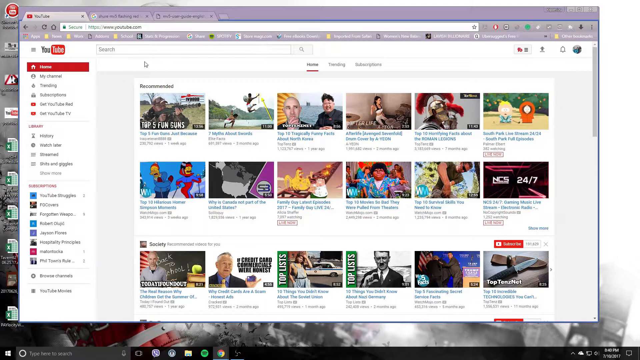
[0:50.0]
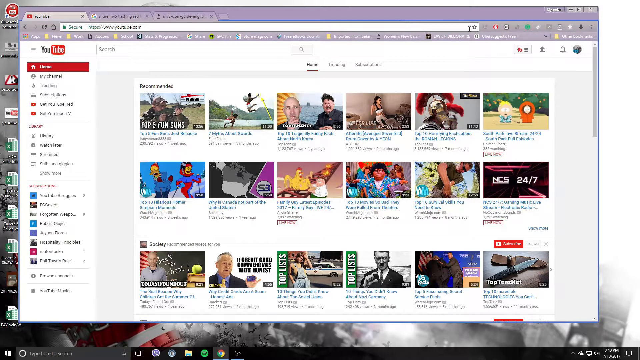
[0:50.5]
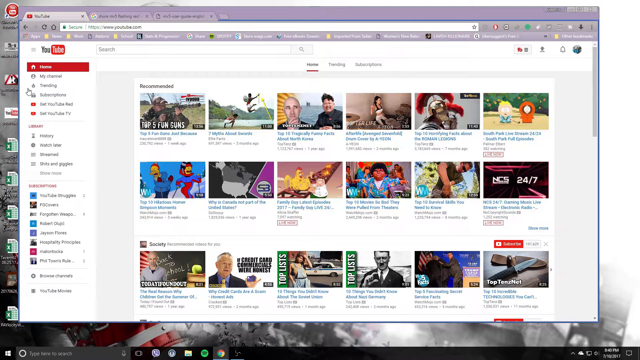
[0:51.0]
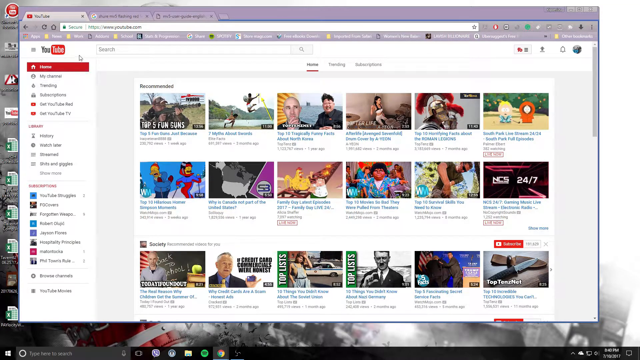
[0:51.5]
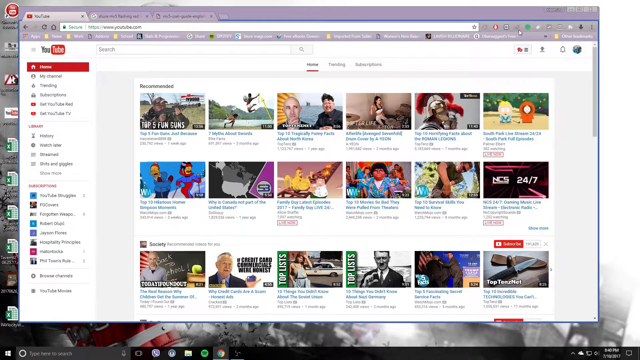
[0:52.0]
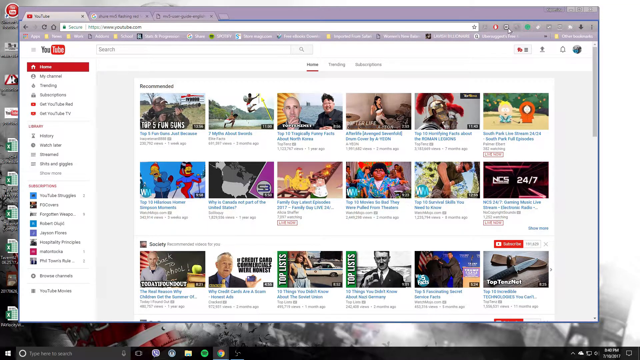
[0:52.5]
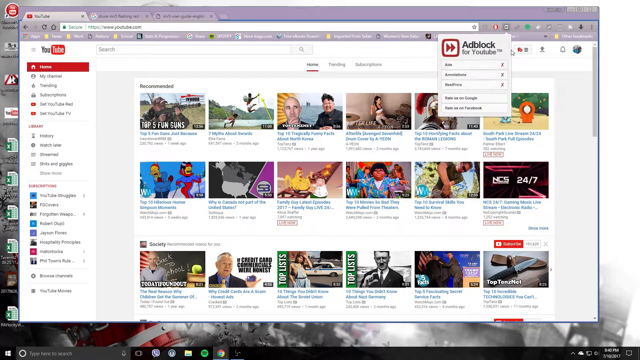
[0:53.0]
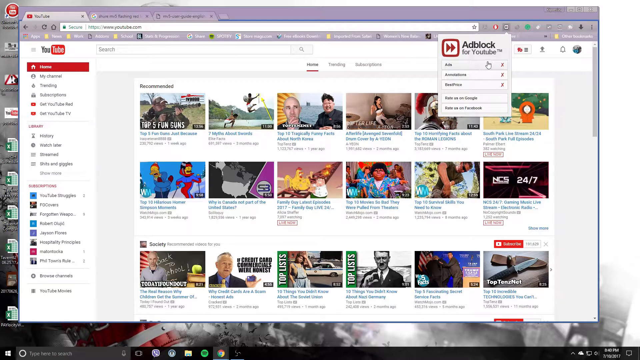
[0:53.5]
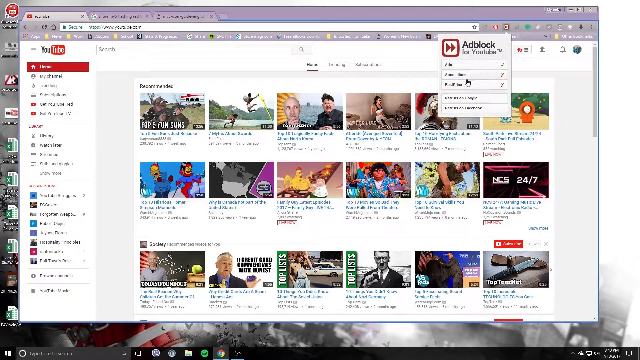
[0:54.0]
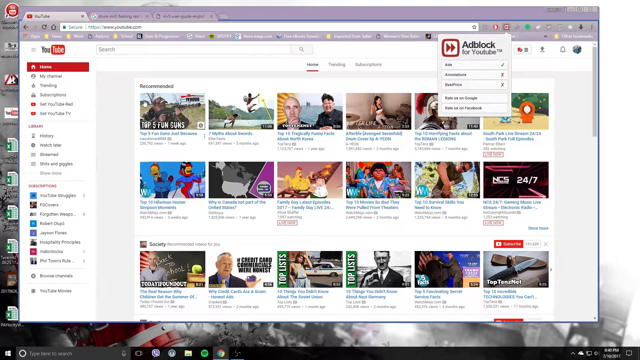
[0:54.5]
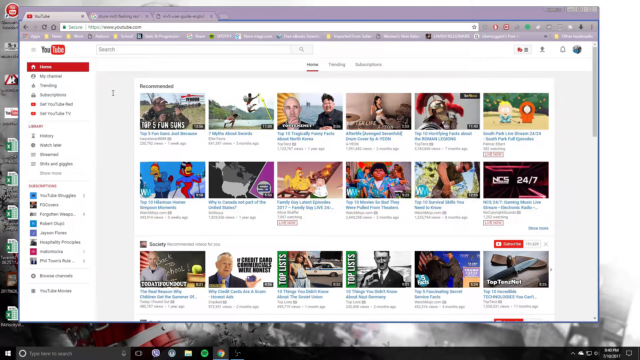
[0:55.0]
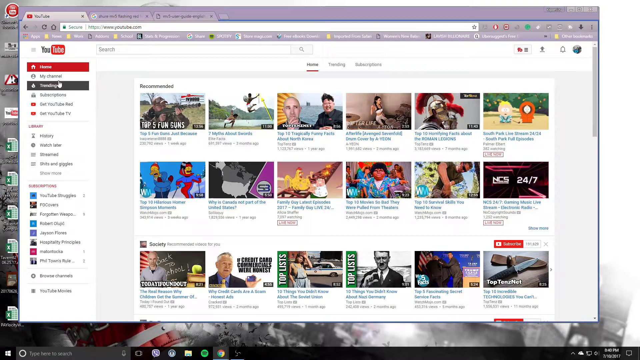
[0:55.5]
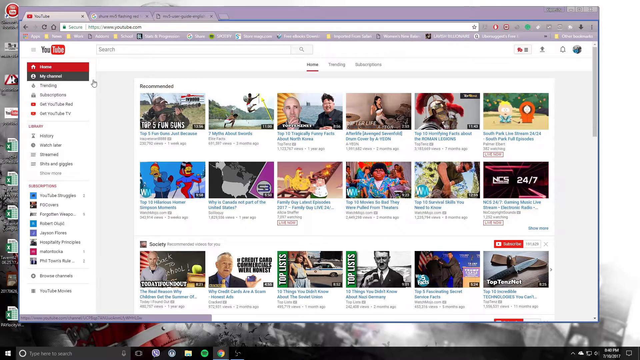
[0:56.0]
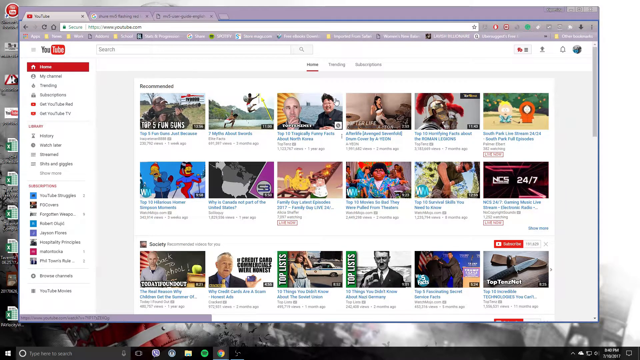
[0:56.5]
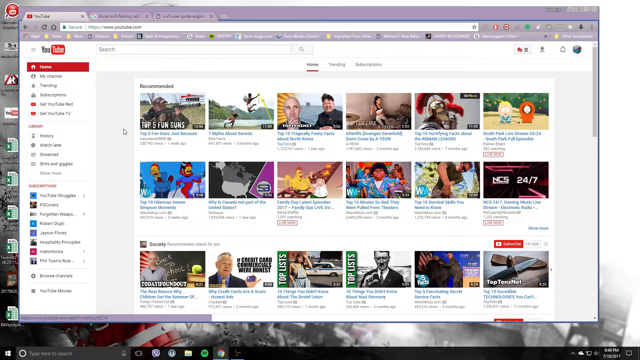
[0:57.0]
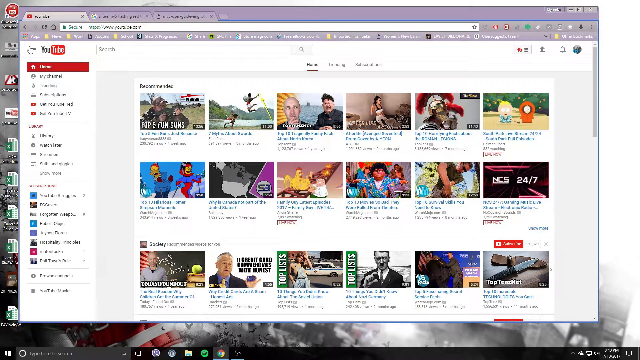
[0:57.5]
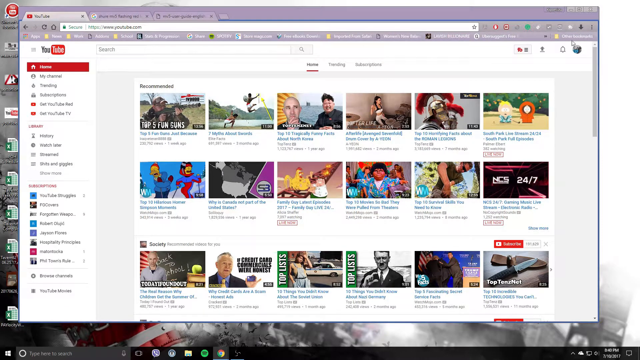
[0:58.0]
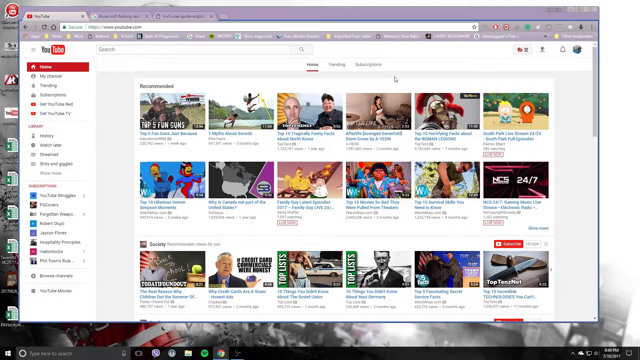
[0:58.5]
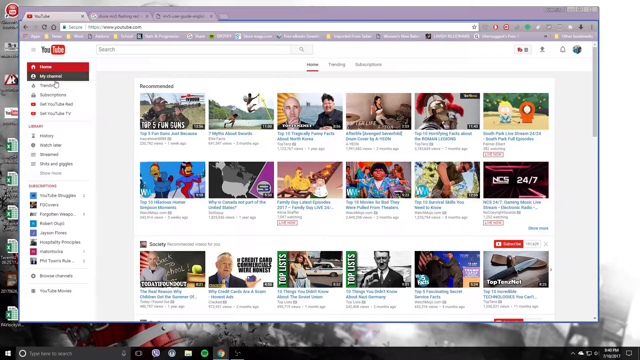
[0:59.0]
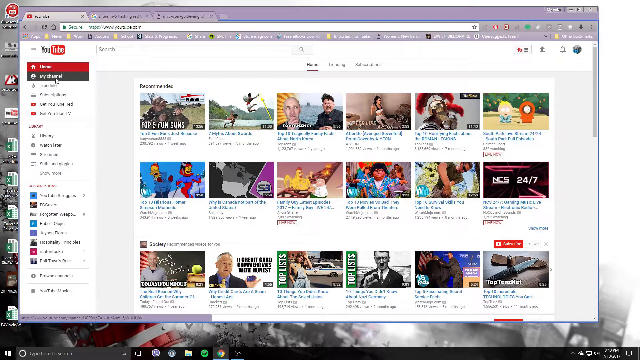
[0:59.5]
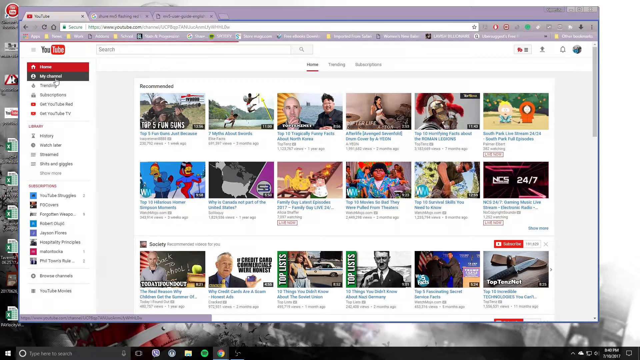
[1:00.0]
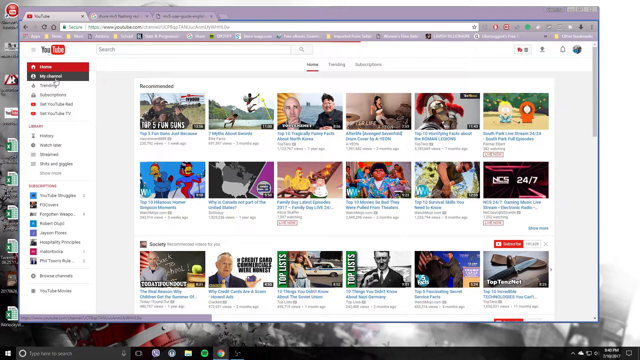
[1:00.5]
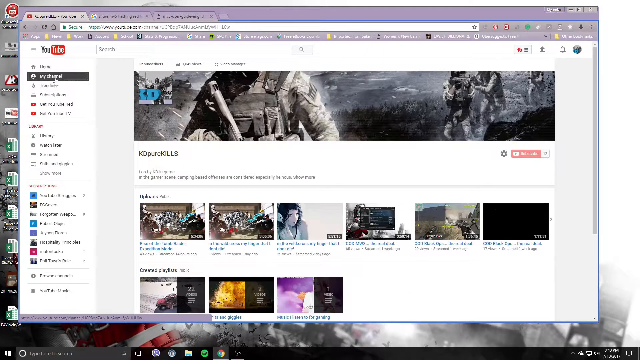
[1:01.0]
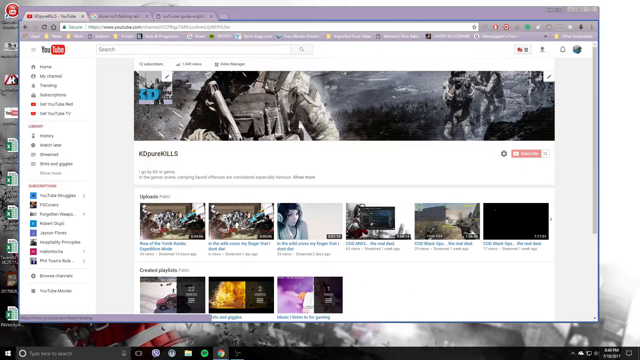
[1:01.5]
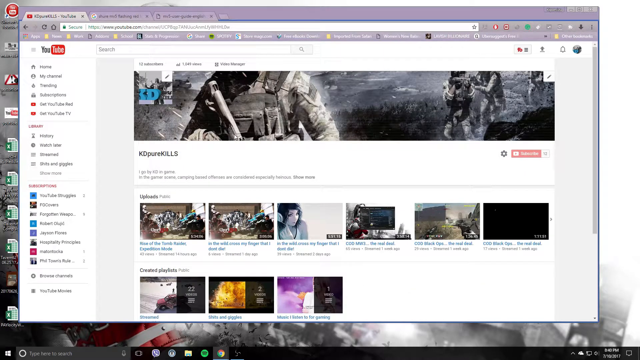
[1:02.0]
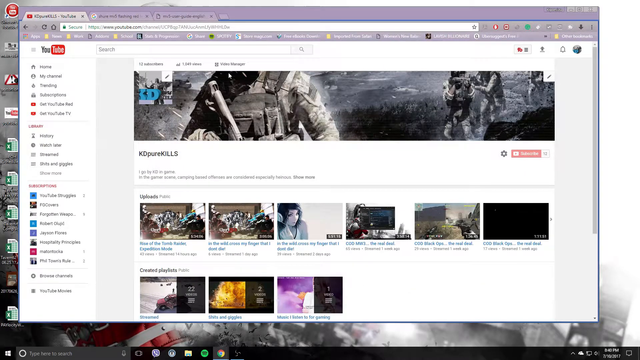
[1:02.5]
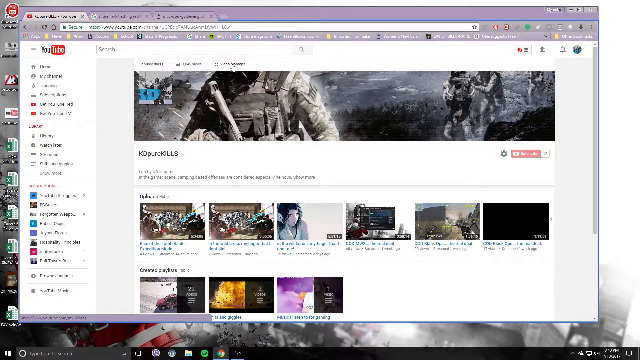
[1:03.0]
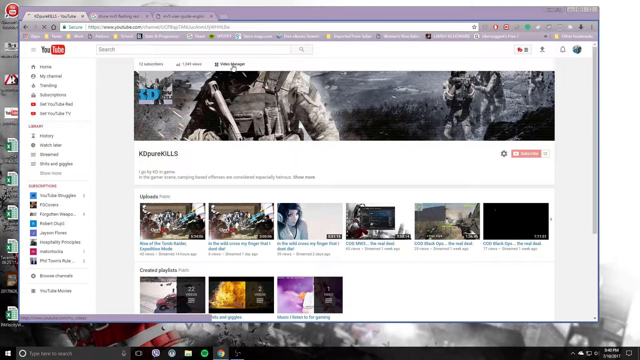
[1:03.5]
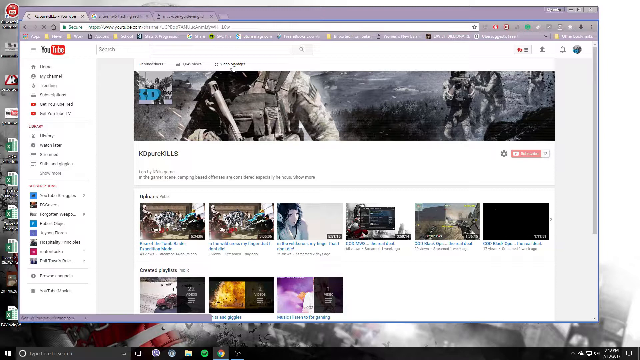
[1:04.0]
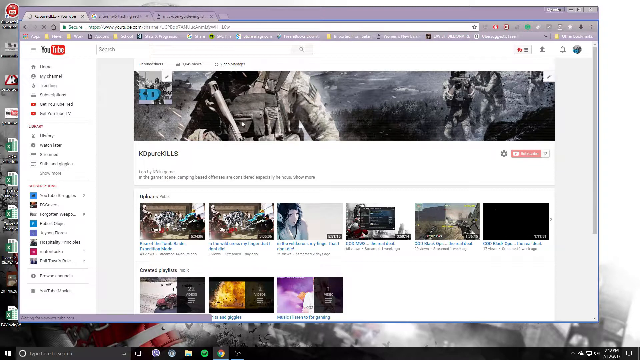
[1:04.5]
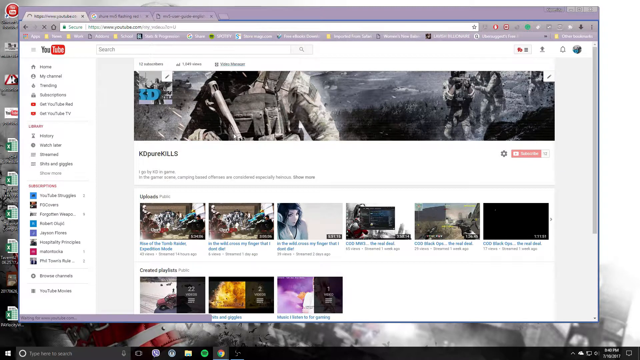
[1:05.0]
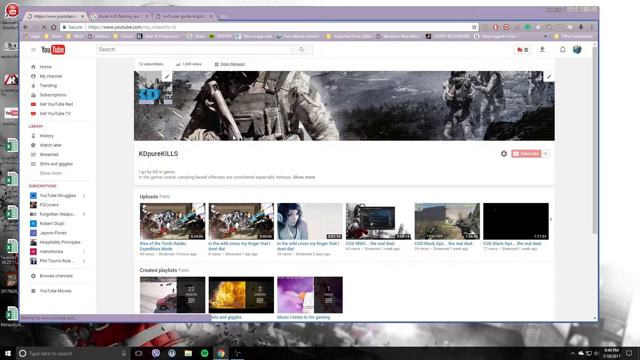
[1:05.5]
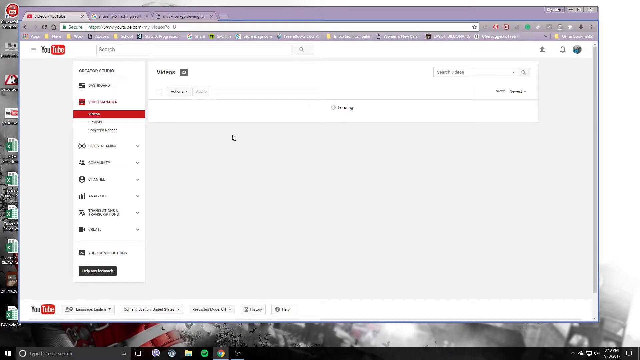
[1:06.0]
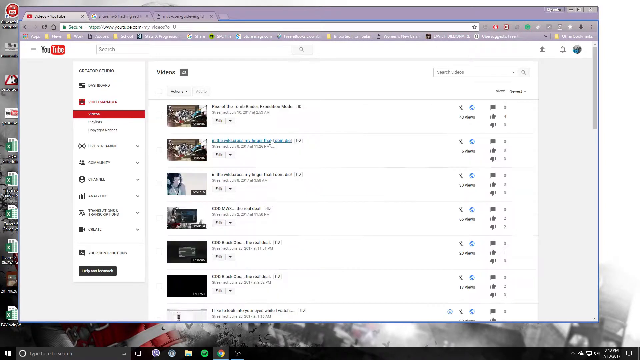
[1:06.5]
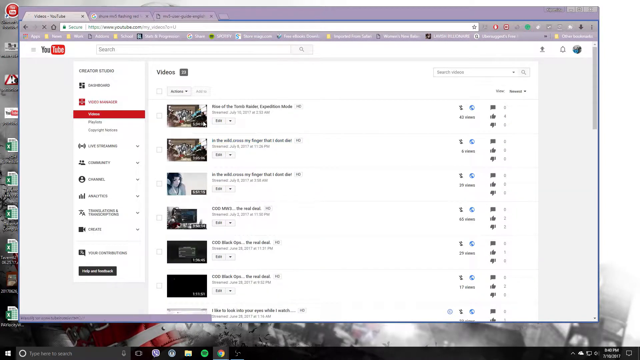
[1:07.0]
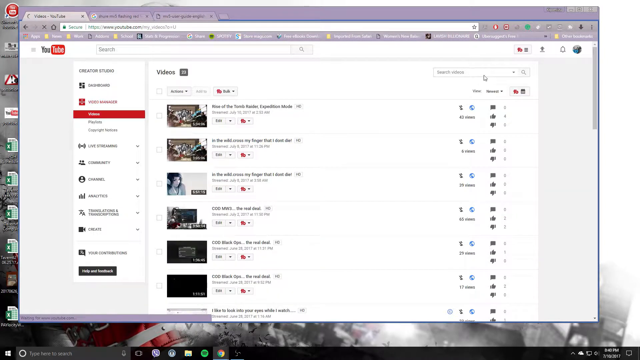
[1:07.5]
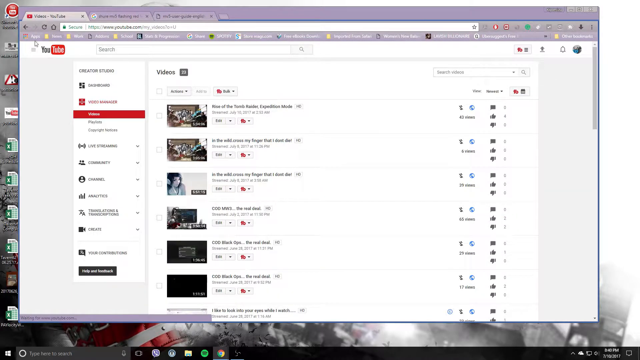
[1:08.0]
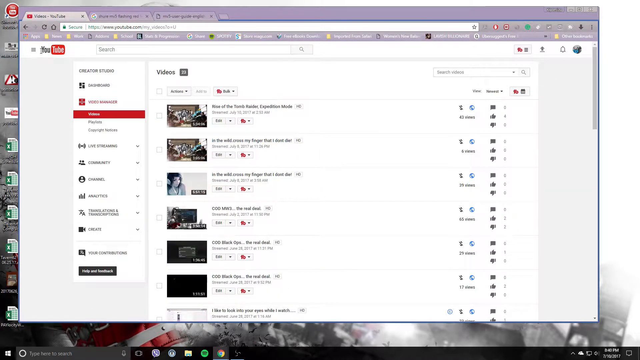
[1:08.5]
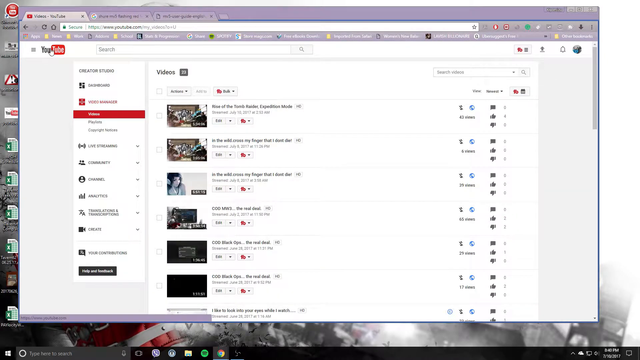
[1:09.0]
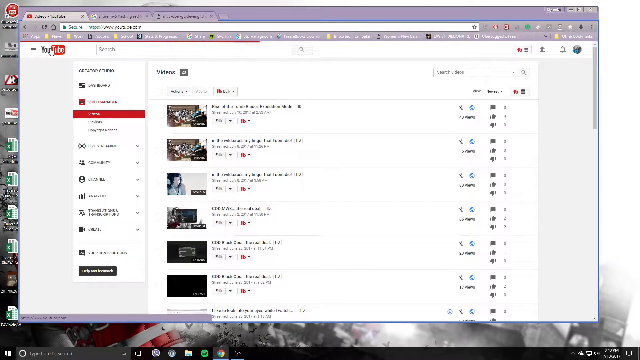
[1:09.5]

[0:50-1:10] The YouTube.com homepage is shown, with the page's tabs at the top; Home is marked by a red rectangle in the menu on the left side. The white background holds numerous title clips of videos. The cursor moves around the screen, selects ad block for YouTube, then goes to the menu, hovers over My Channel, moves around a little more, and clicks on My Channel, changing the screen to Katie Pure Kills. It then selects Videos and goes back to the home screen. All of this happens very quickly, with each page shown barely long enough to see what is on it, and nothing on those pages is selected.